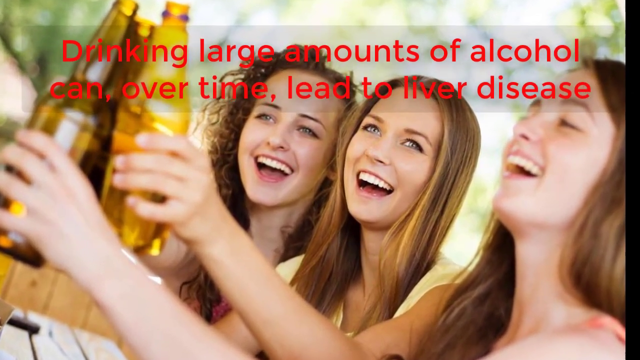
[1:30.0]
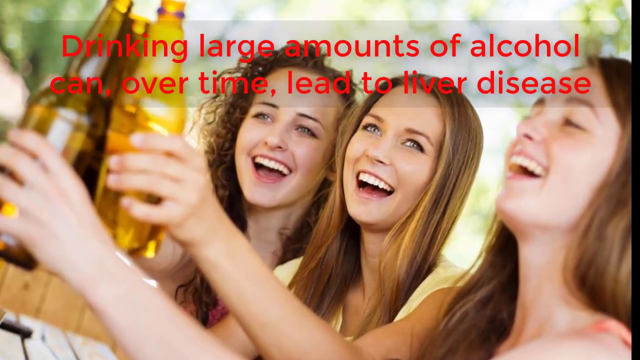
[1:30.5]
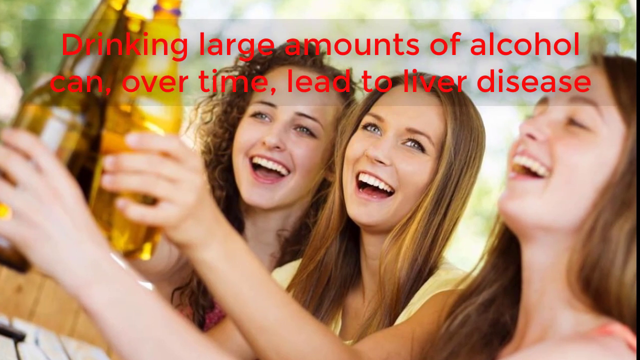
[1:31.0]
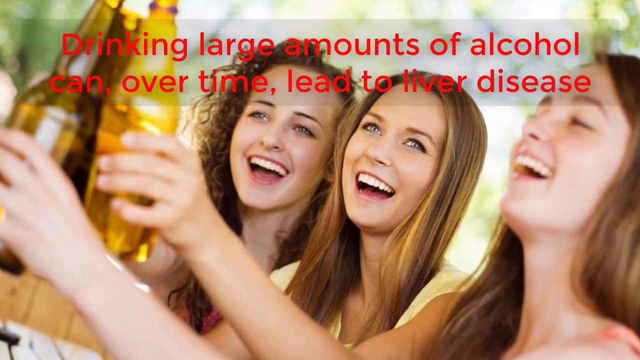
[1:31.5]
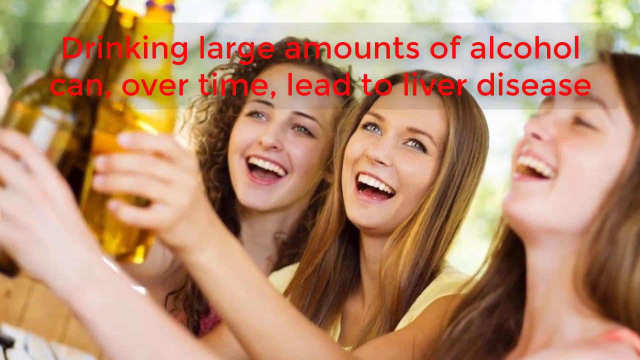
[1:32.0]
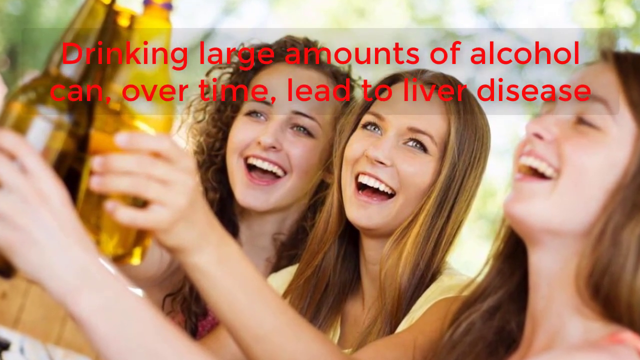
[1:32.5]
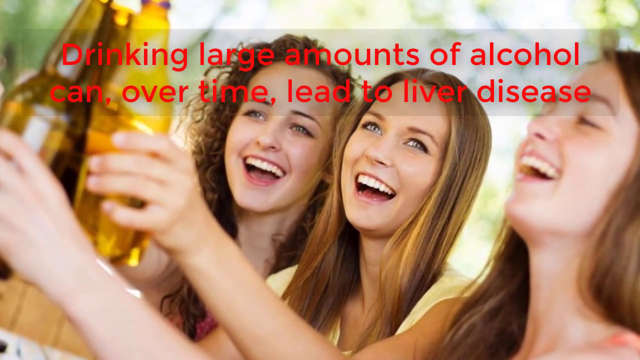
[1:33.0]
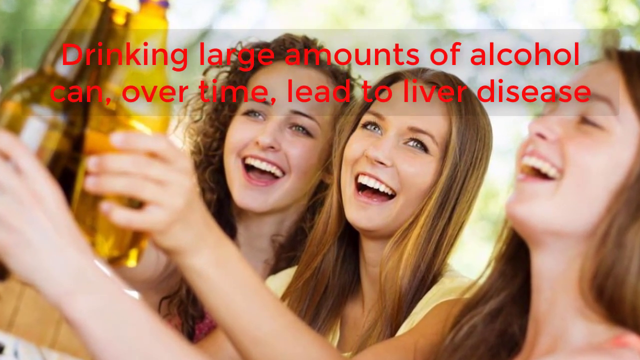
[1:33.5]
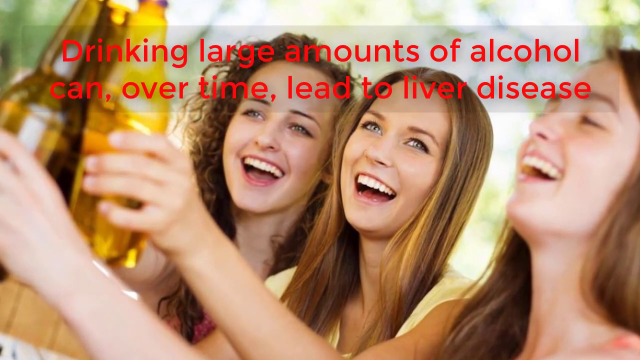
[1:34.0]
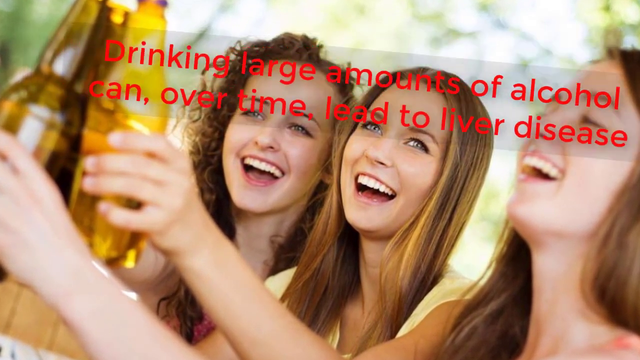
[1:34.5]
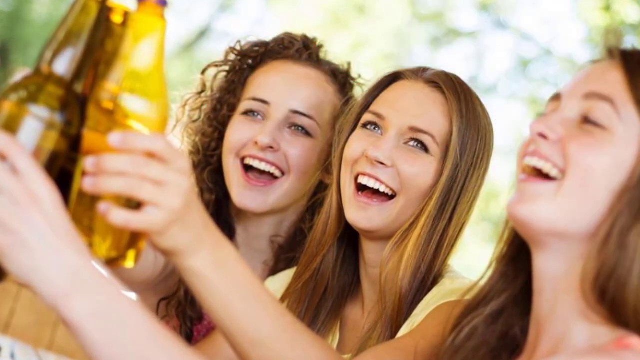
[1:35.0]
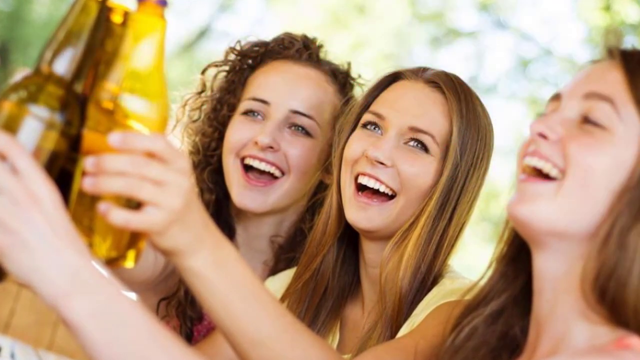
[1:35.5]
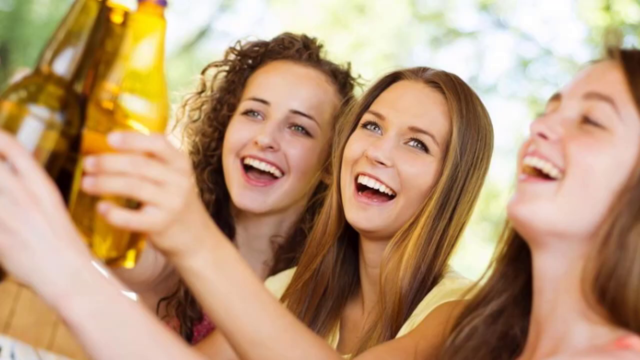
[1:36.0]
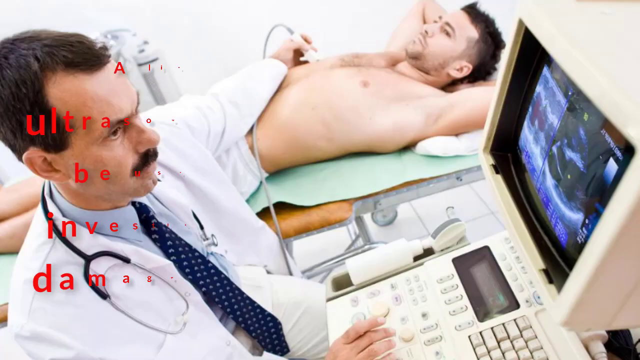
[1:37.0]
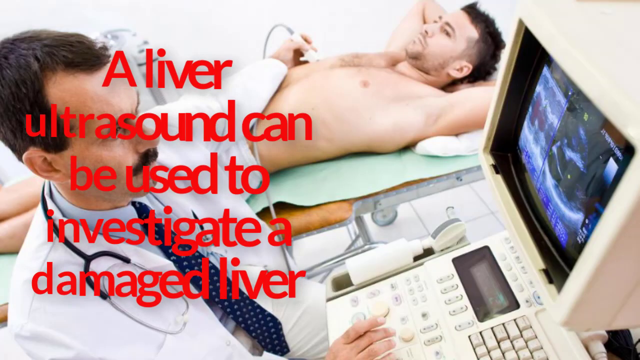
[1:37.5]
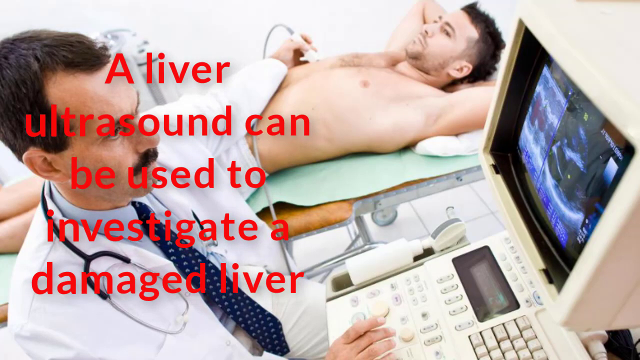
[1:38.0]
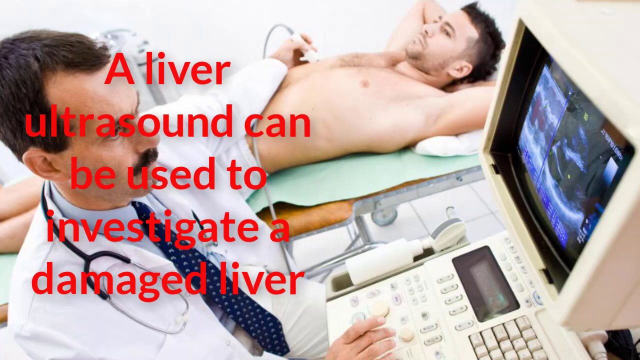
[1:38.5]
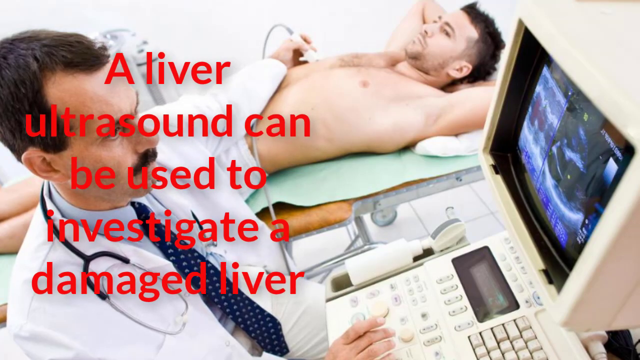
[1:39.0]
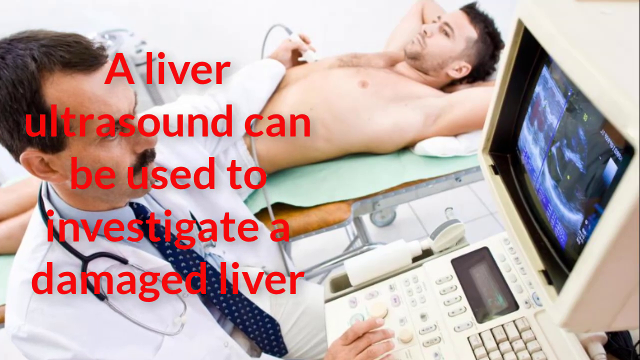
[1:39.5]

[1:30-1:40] Three girls, all holding what look like beer bottles in their hands, are smiling. All three have brown hair; two have straight hair and one has curly hair. Red text in the foreground reads "drinking large amounts of alcohol can, over time, lead to liver disease." The camera kind of zooms in a little, and the words fly out from the top of the screen to the right. It then cuts to a scene of a man laying down on a hospital bed, with what seems to be a doctor in front of a computer, wearing a white coat and a blue tie. Red text in the foreground reads "a liver ultrasound can be used to investigate a damaged liver."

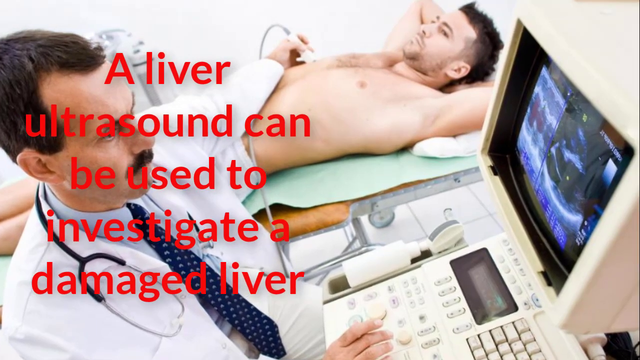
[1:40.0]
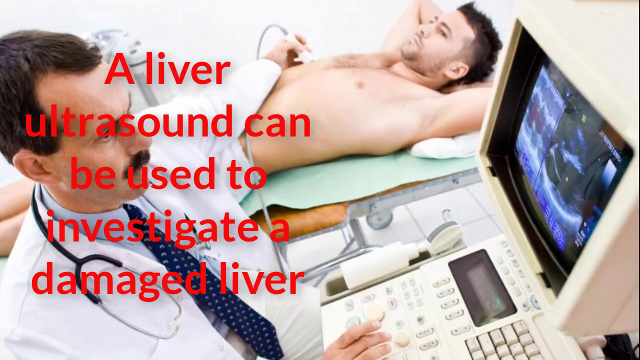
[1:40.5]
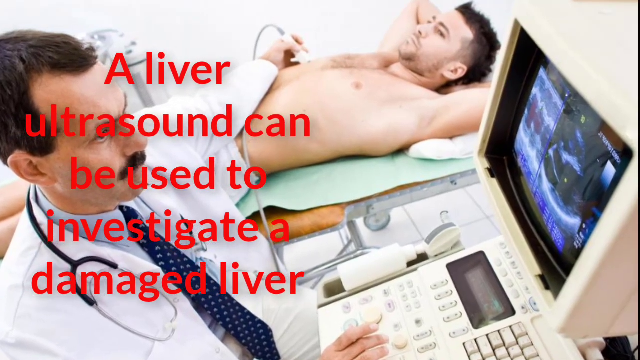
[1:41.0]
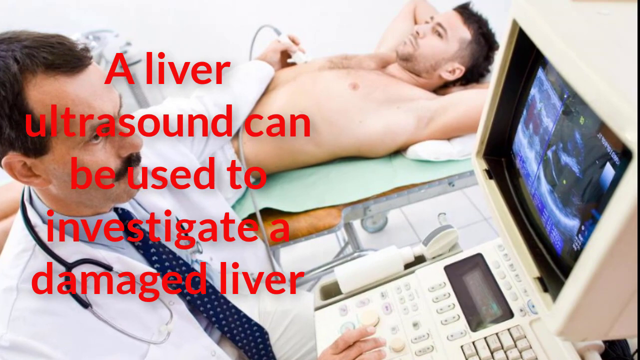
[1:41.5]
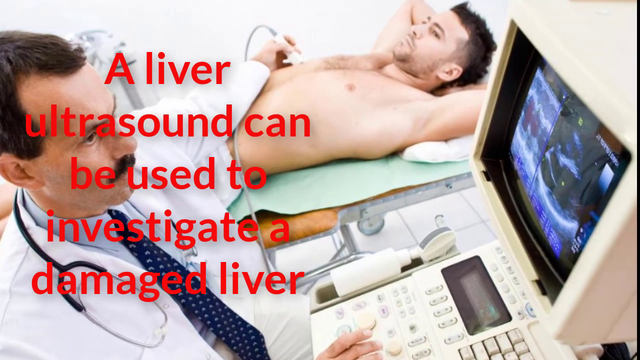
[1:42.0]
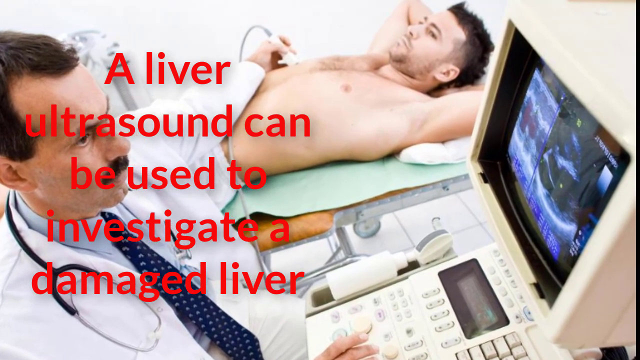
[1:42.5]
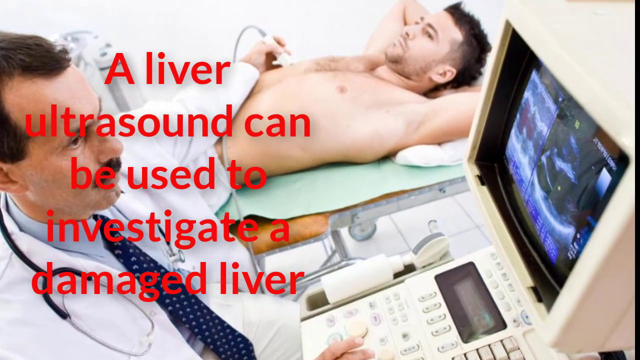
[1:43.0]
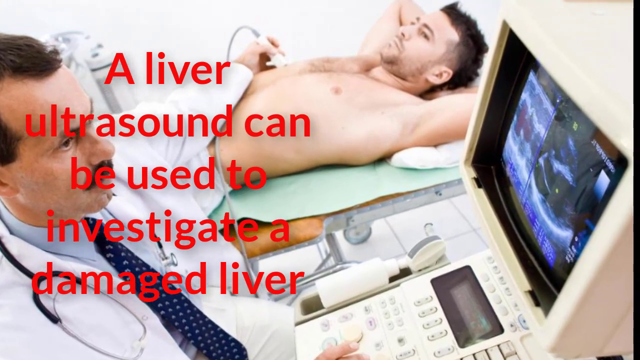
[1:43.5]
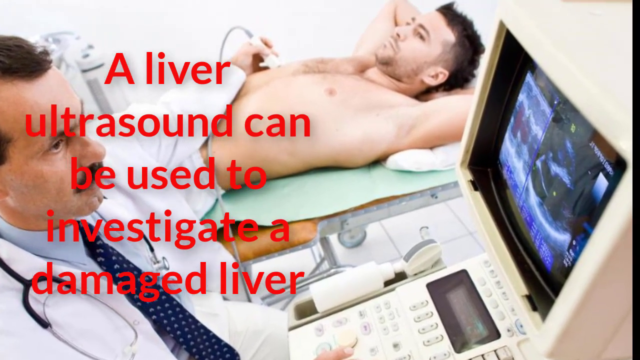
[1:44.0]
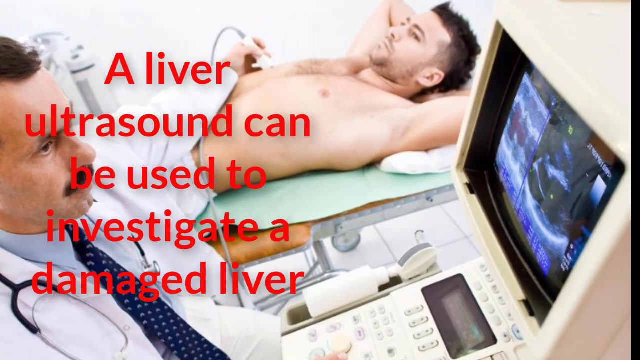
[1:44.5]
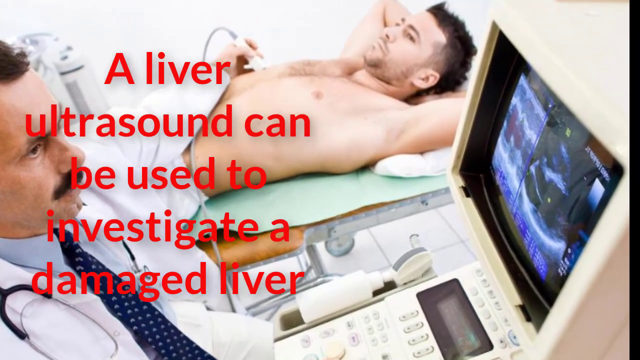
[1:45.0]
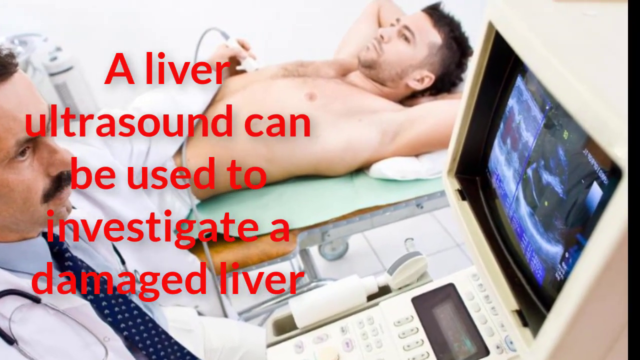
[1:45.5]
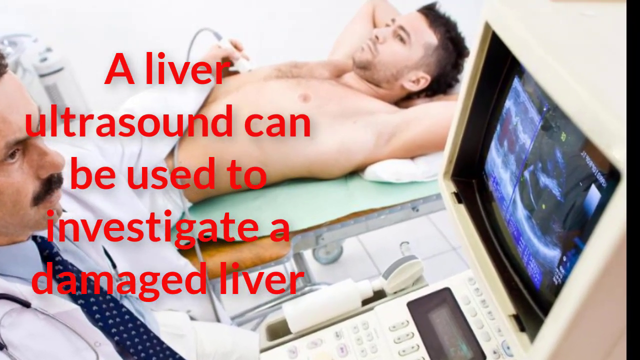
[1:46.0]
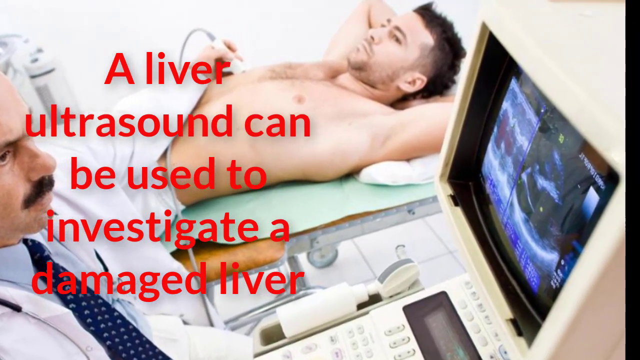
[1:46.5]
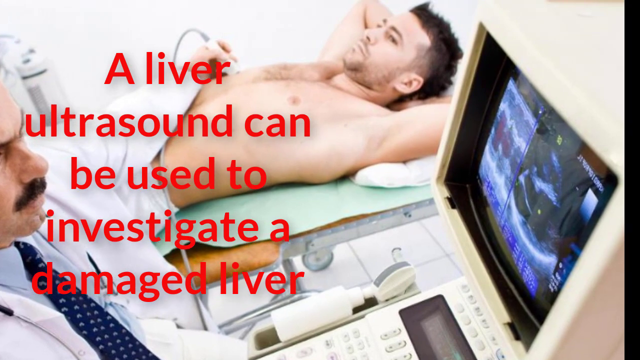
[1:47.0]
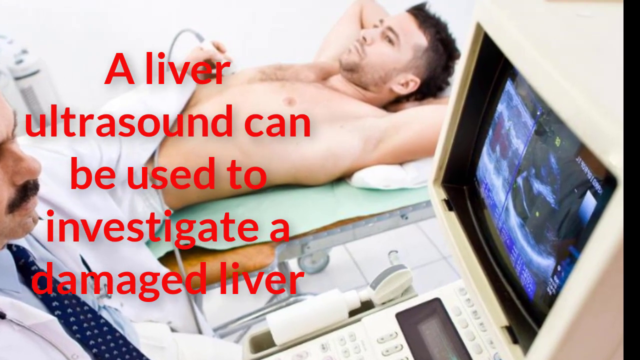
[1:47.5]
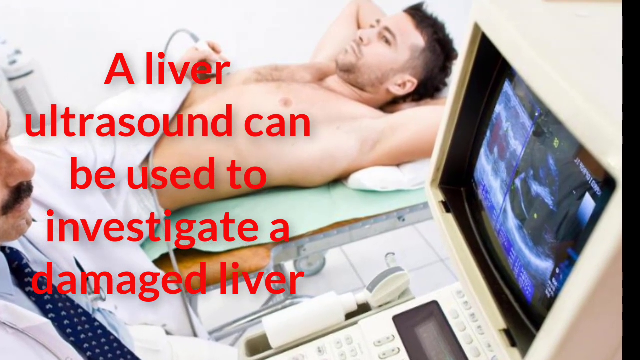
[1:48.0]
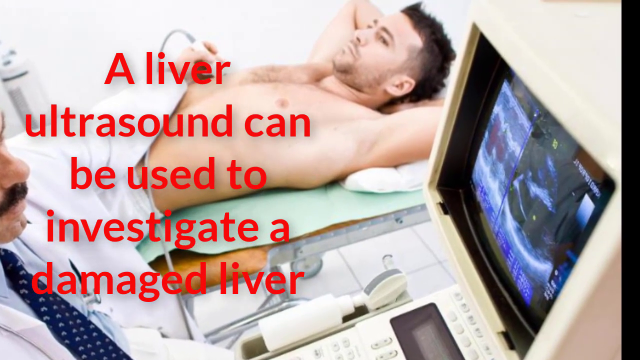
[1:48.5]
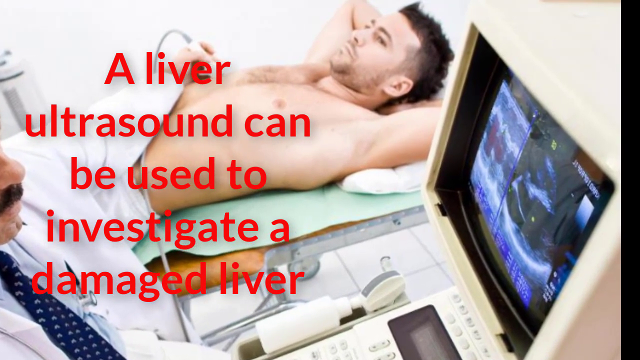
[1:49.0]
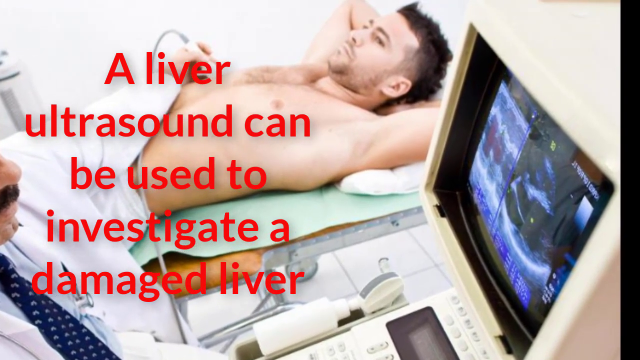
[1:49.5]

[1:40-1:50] A person seems to be laying down on a hospital bed, with a doctor in front of him staring at a computer. The doctor holds some kind of instrument in his left hand above the patient's stomach. The doctor wears a white coat and a blue tie and has a mustache. Red text in the foreground reads "a liver ultrasound can be used to investigate a damaged liver." The camera zooms in for a closer view of the computer screen, where the doctor is looking at the patient's liver.